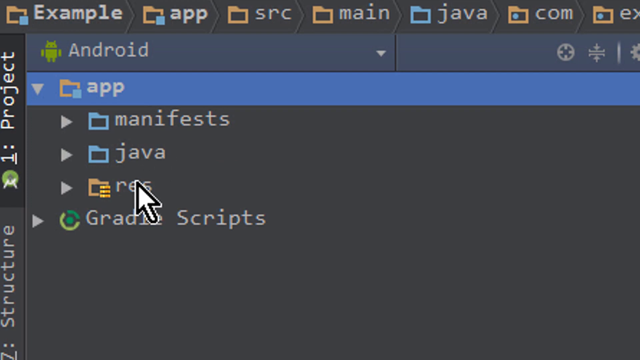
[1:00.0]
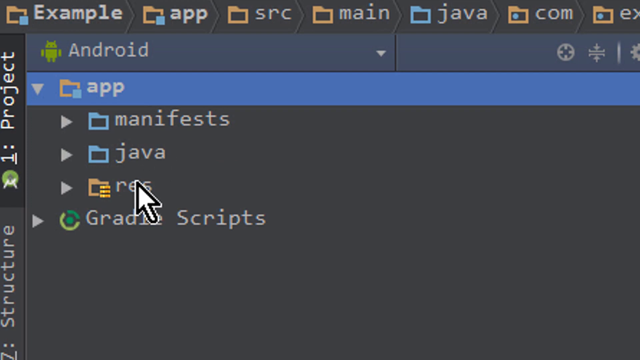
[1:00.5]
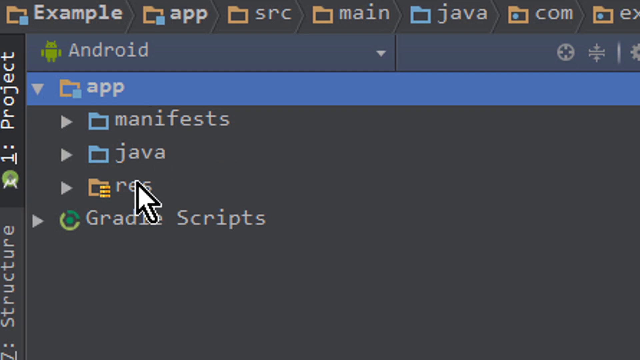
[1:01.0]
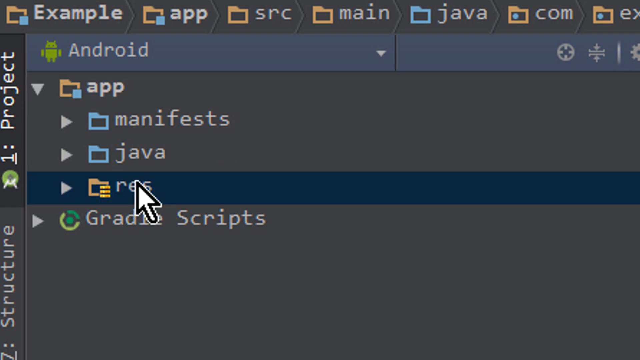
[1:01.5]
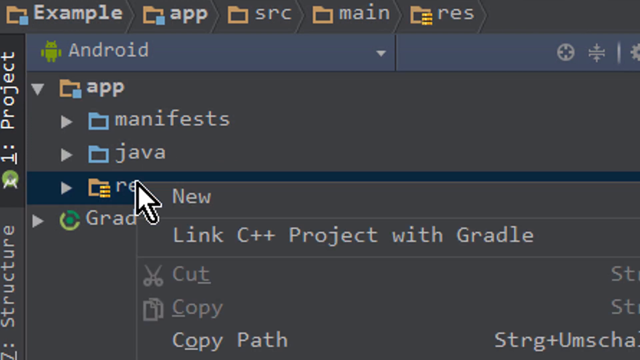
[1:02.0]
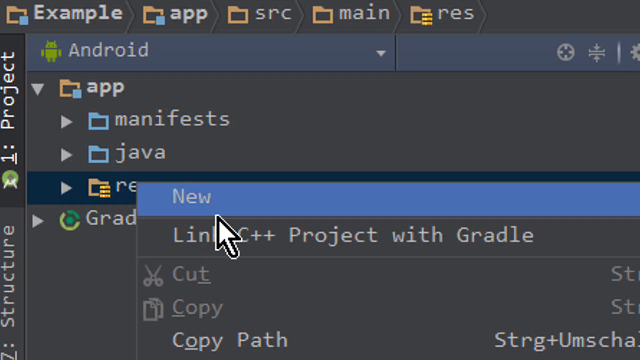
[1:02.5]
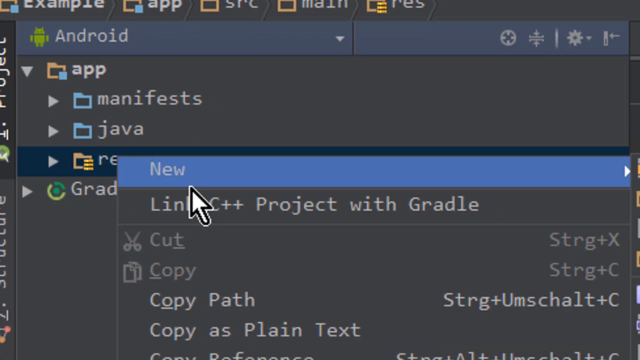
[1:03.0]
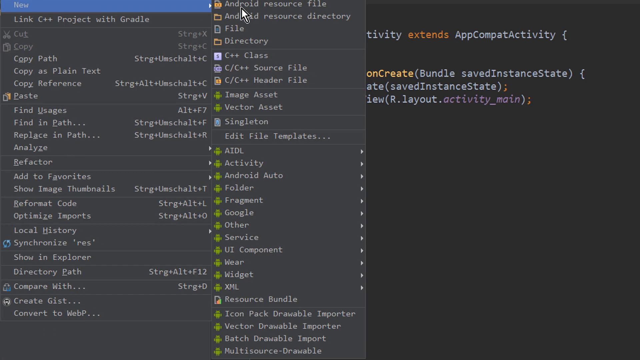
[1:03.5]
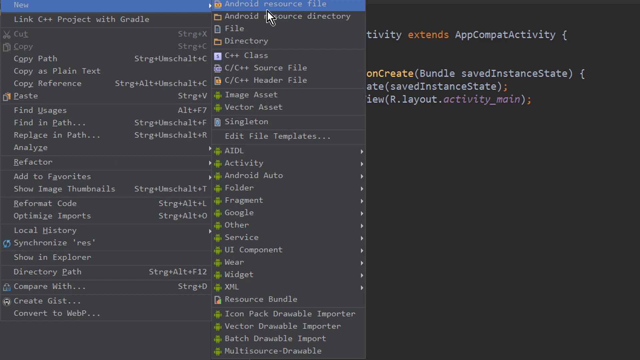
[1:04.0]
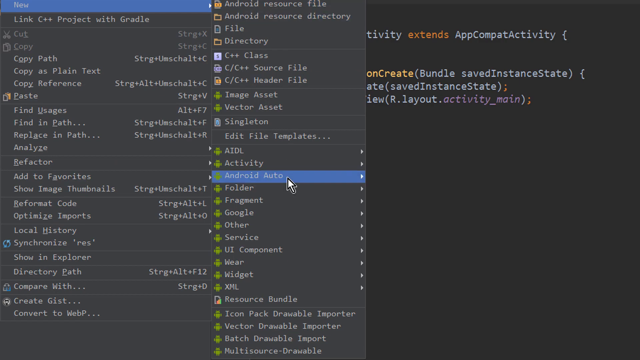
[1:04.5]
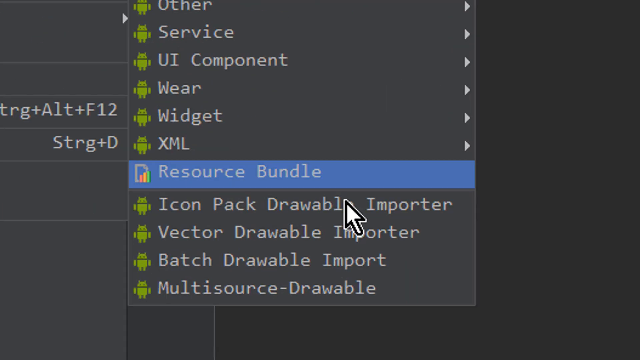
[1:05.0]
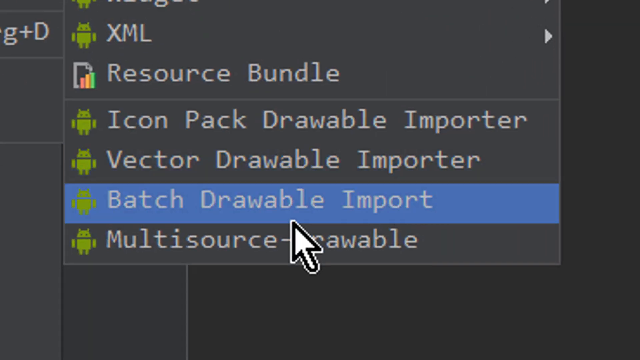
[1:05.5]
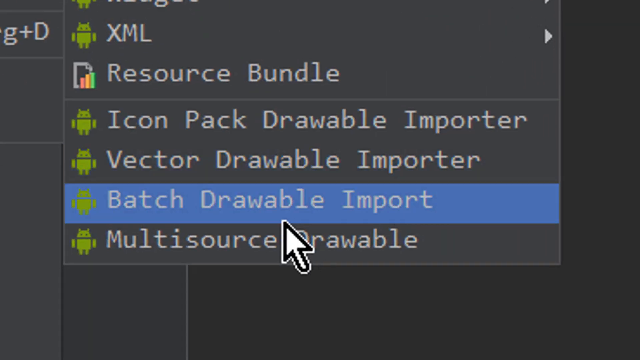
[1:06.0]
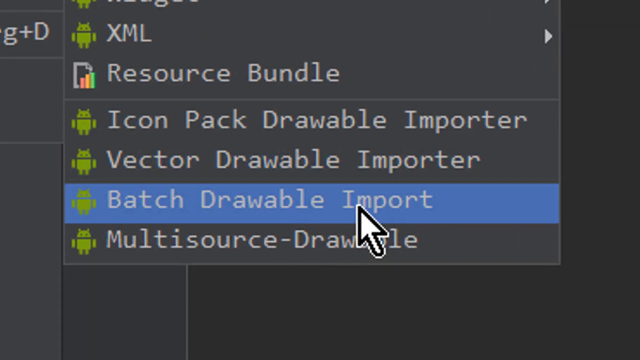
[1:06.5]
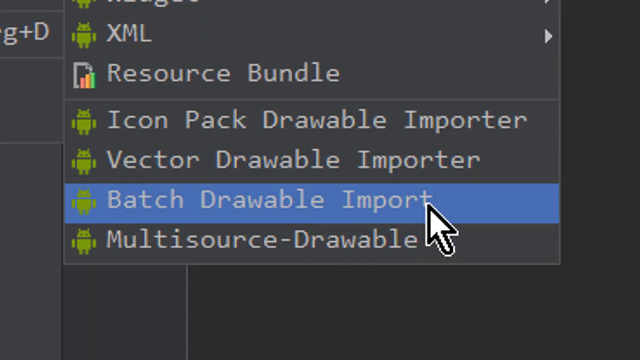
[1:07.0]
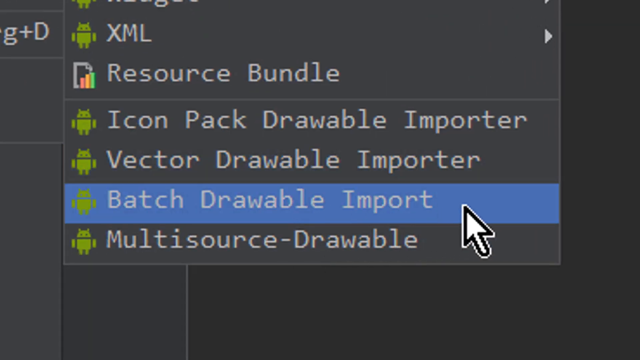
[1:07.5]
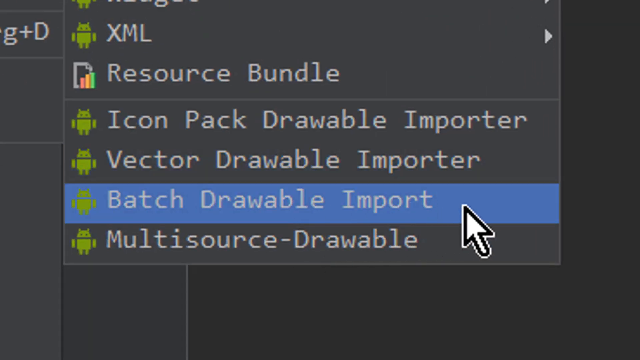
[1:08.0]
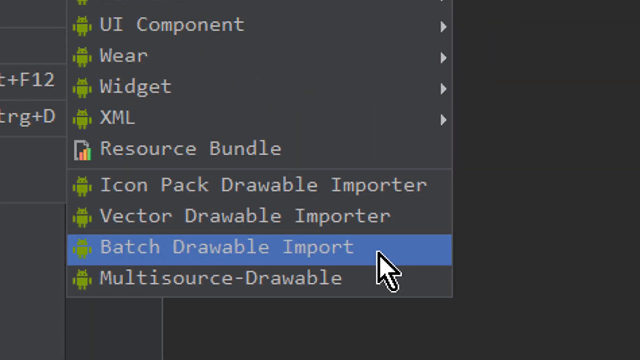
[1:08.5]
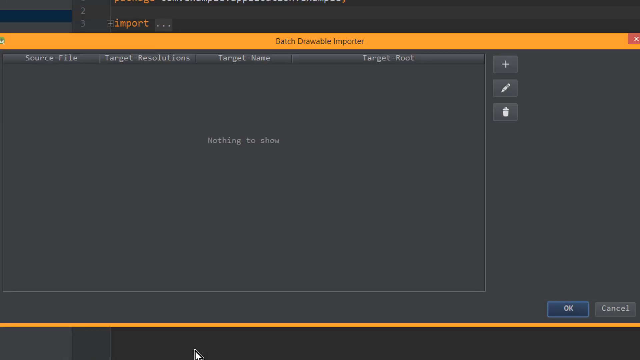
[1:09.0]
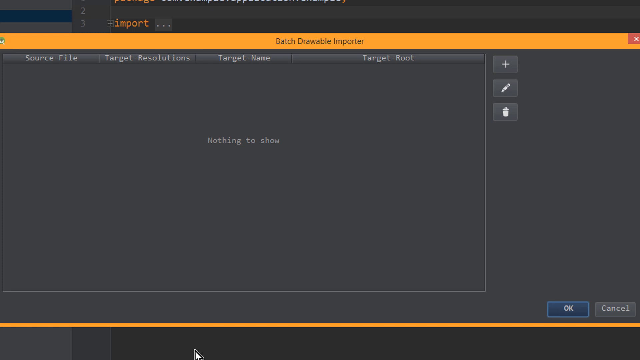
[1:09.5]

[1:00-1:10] The user clicks on the orange res folder, selects "new" from the drop-down menu, and scrolls to the right onto a second menu, all the way to the bottom, where there is a green android character with white text reading "batch drawable import". The user selects this, and an orange-bordered box opens with black text at the top reading "batch drawable import". The box is dark grey and relatively empty in the middle. The user moves the mouse to the right to click on a different option.